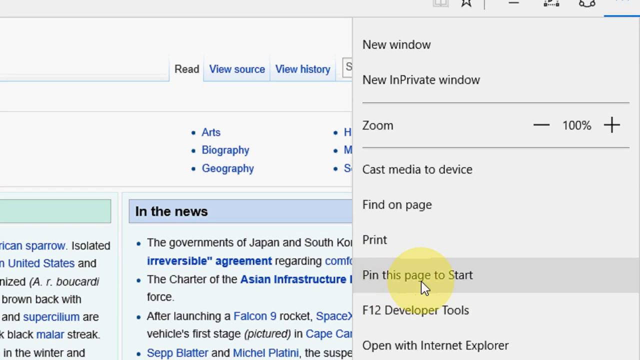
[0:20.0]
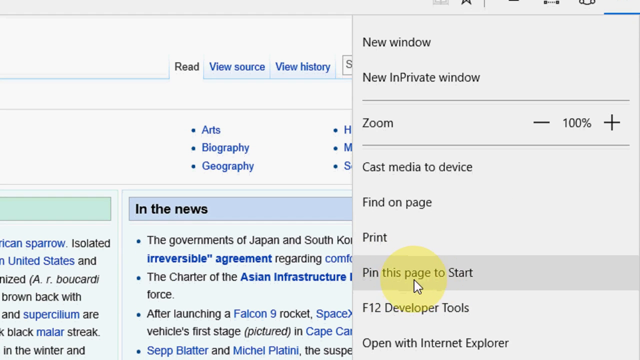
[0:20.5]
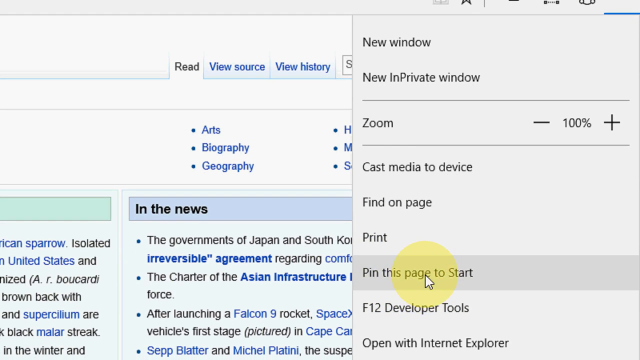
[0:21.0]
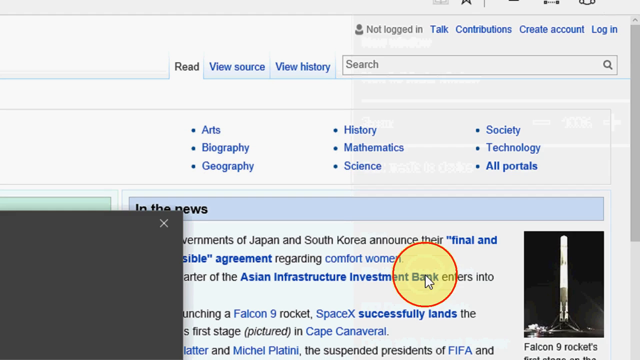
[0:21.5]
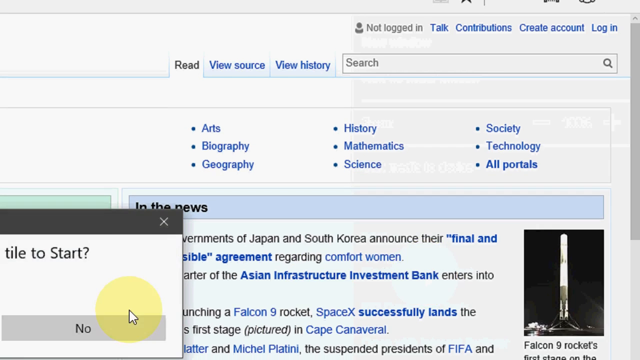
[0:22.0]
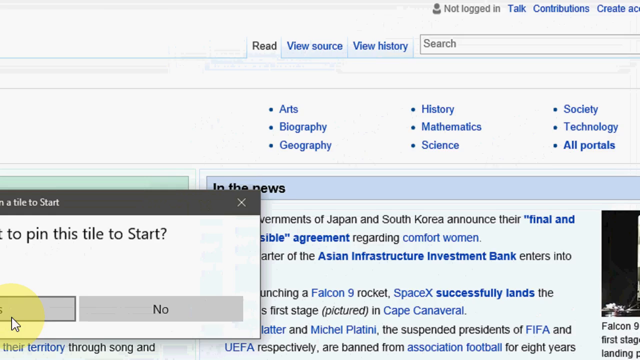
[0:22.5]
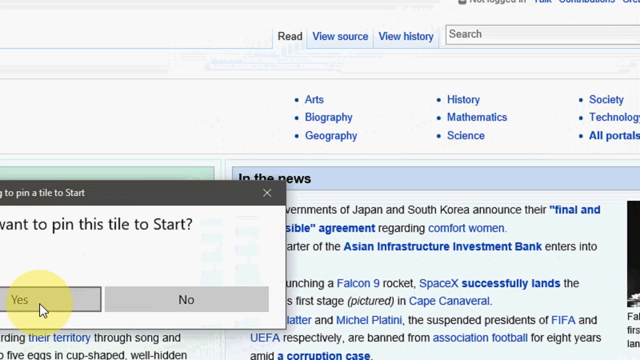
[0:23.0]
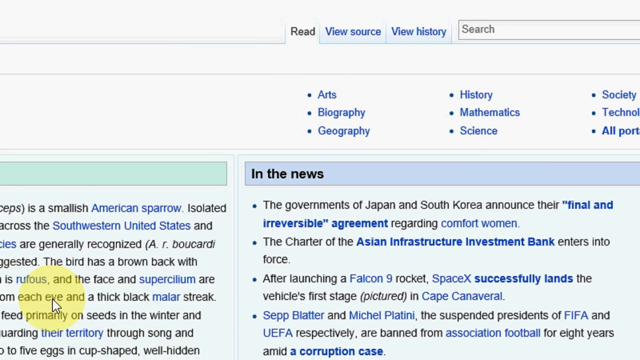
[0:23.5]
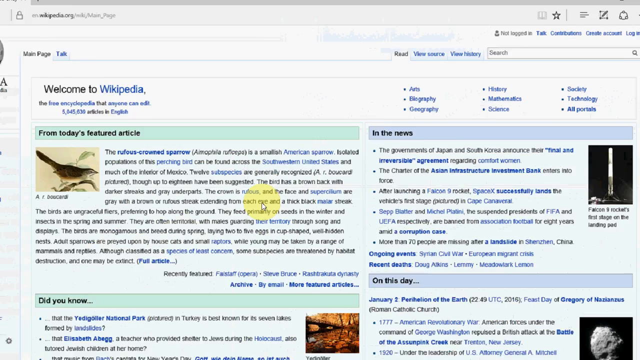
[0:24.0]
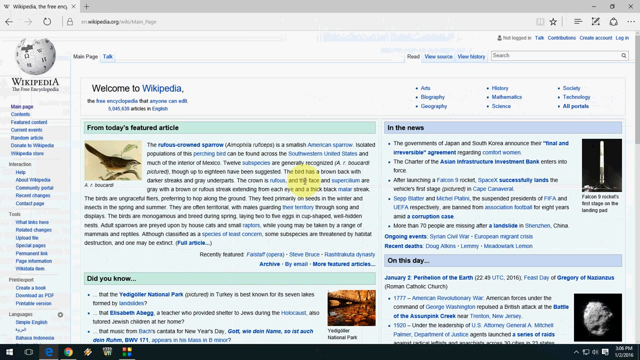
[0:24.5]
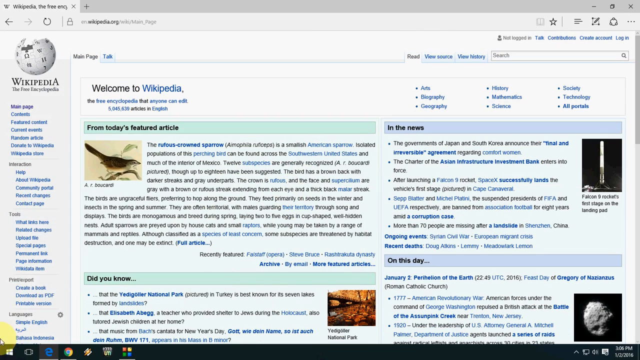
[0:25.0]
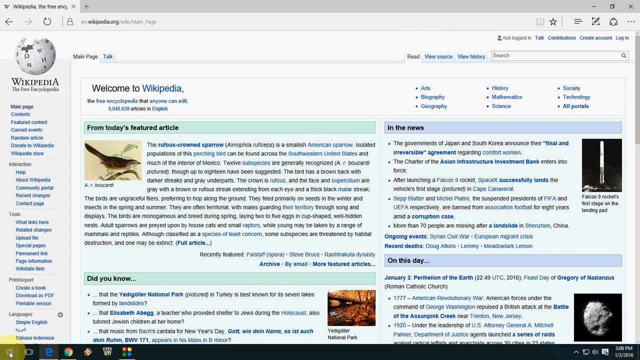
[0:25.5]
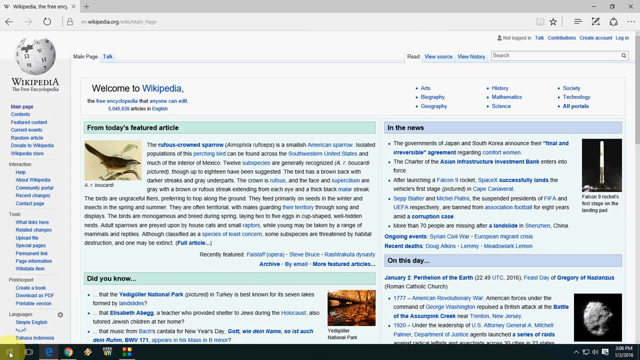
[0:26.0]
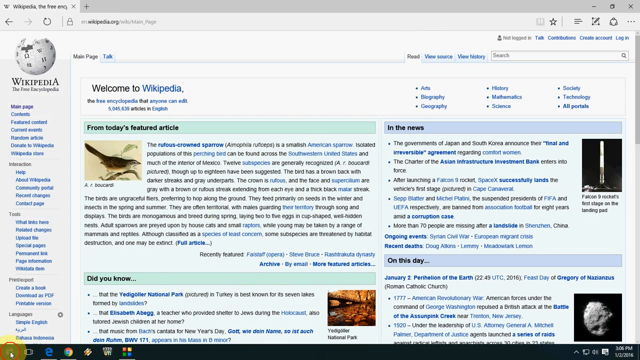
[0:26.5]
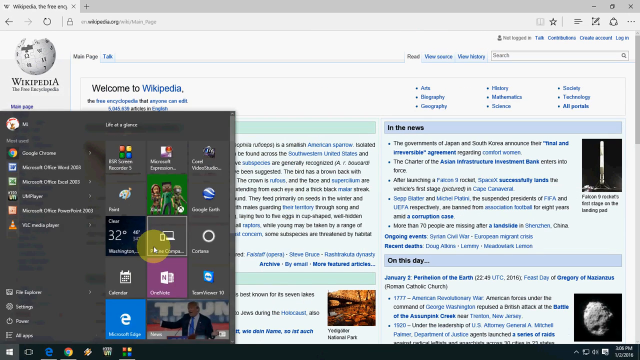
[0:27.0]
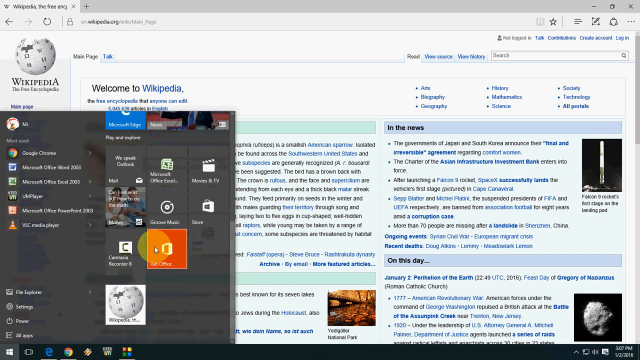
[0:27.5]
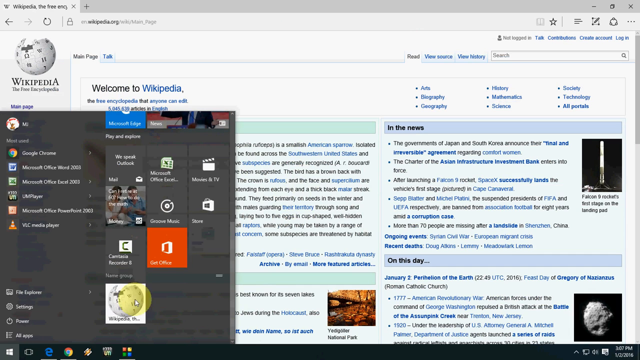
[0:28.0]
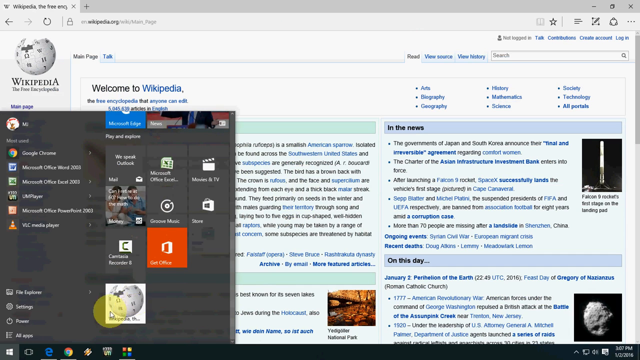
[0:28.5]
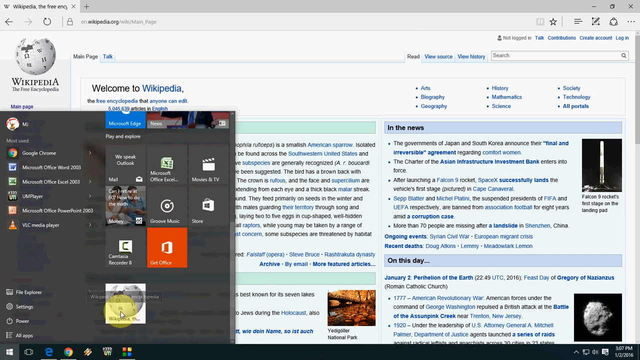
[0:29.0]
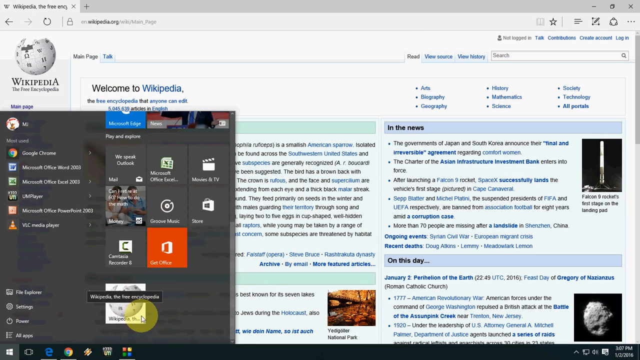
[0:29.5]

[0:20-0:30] A zoomed-in Wikipedia web page is shown. The mouse hovers over the browser's toolbar and settings option, pointing to the words "pin this page to start". A prompt asks whether to pin the page to start, and the mouse clicks yes. The Wikipedia homepage reappears, with four categorized blocks of text reading "from today's featured article", "in the news", "did you know" and "on this day". The user opens the Microsoft Windows menu, and various Windows options are shown while the bar is open. The browser is then shown again with "pin this page to start" selected in the browser's settings menu; the mouse hovers over those words, and a yellow circle marks where the mouse moves and what it selects.